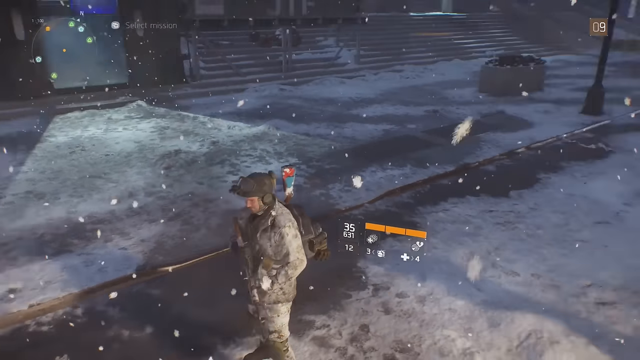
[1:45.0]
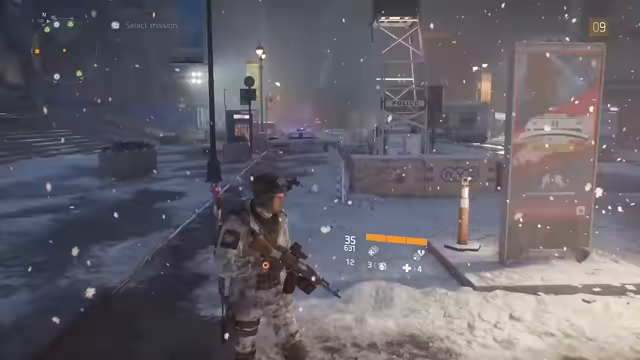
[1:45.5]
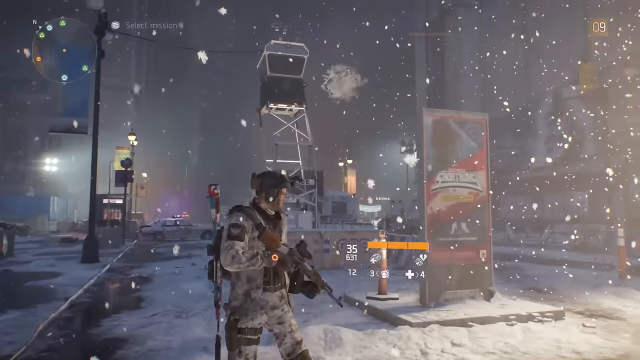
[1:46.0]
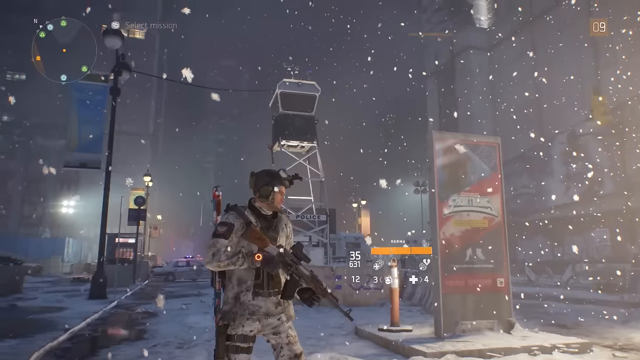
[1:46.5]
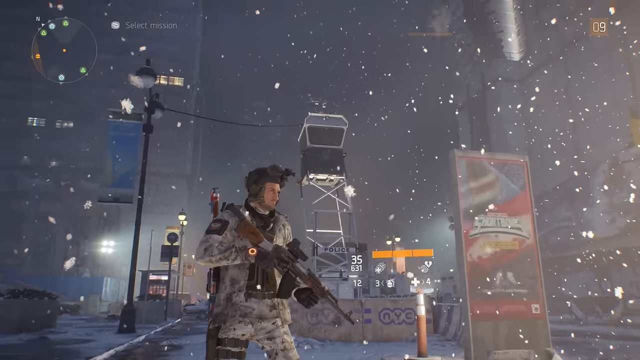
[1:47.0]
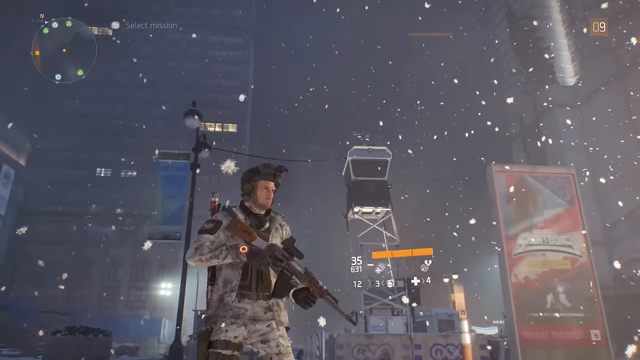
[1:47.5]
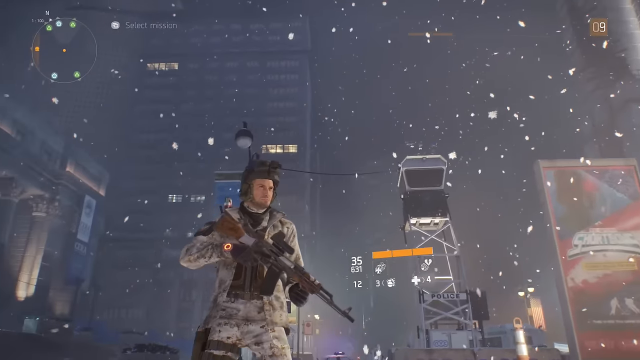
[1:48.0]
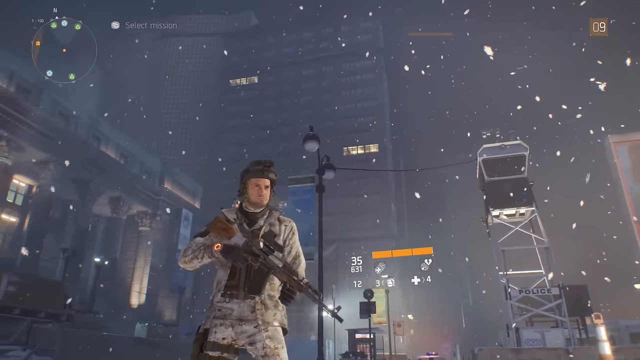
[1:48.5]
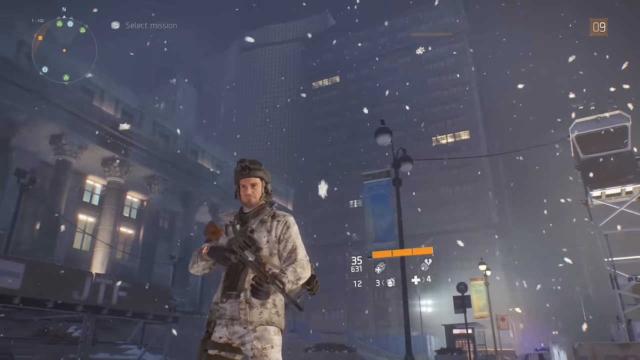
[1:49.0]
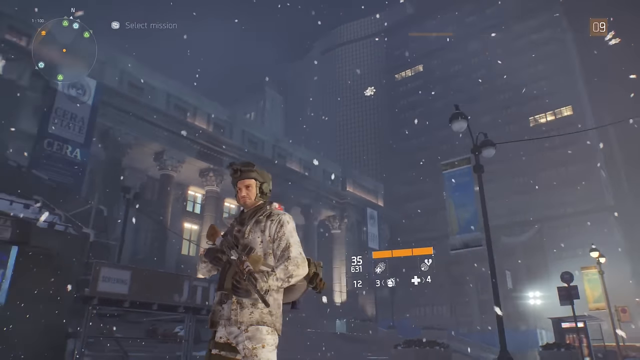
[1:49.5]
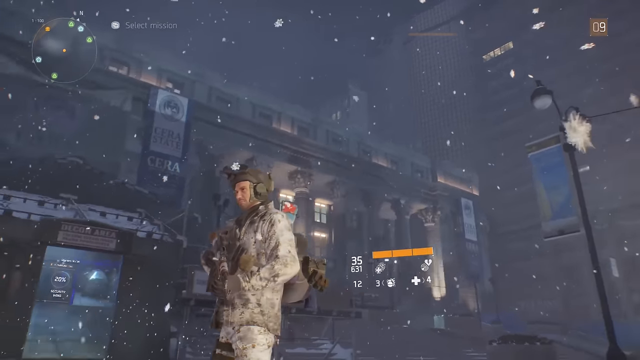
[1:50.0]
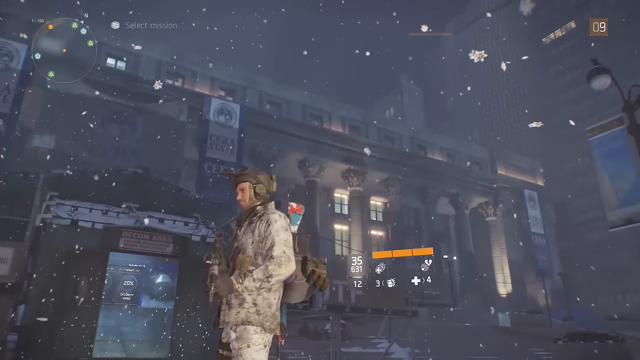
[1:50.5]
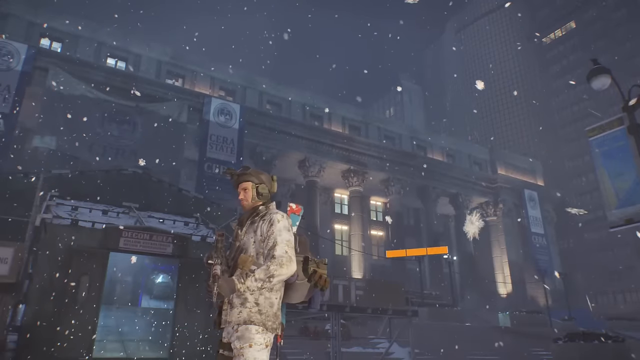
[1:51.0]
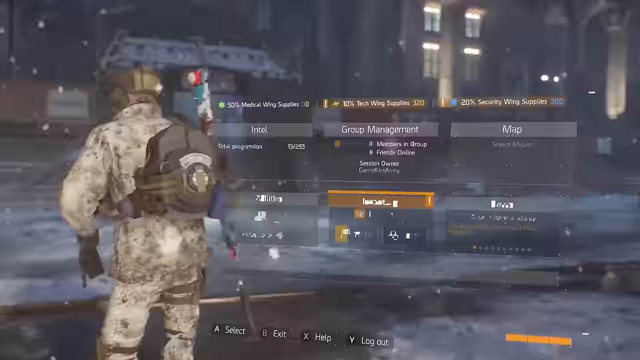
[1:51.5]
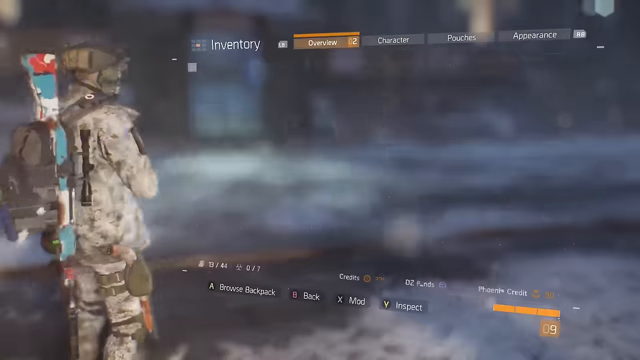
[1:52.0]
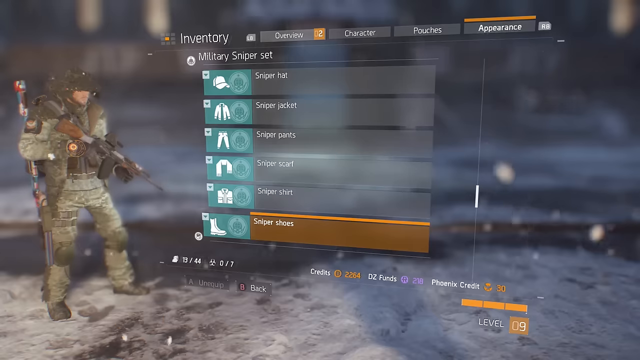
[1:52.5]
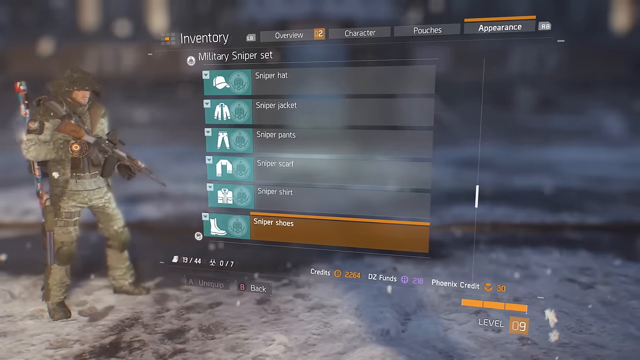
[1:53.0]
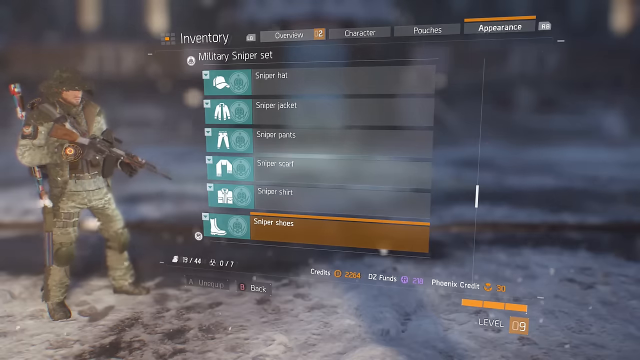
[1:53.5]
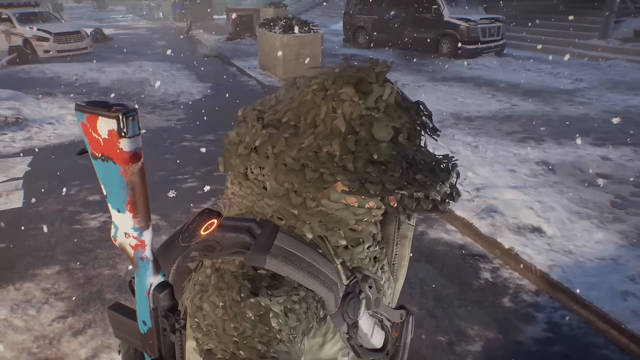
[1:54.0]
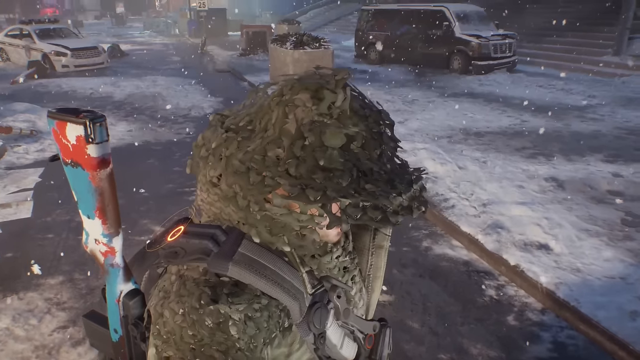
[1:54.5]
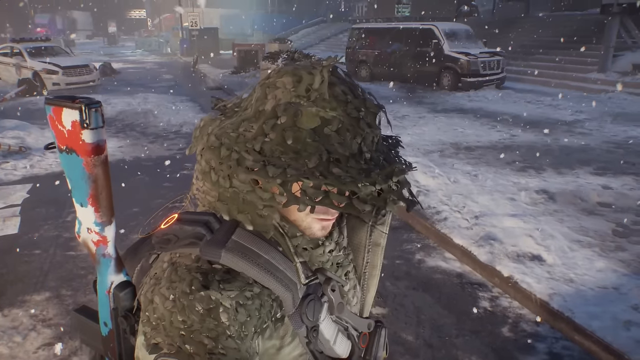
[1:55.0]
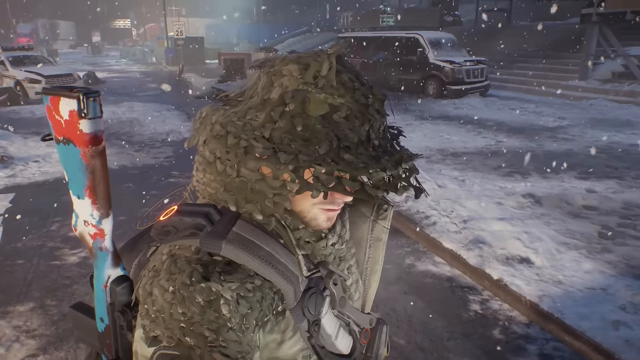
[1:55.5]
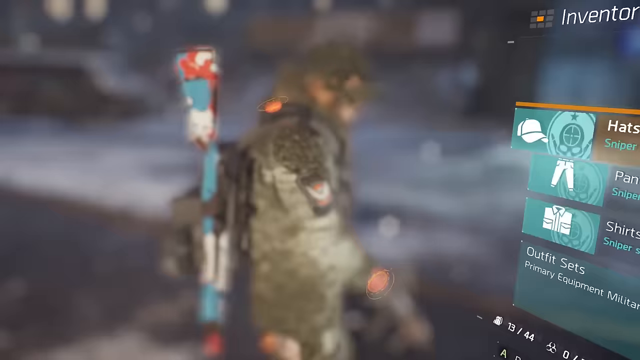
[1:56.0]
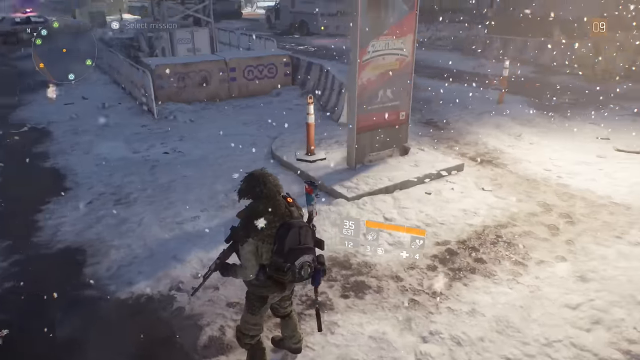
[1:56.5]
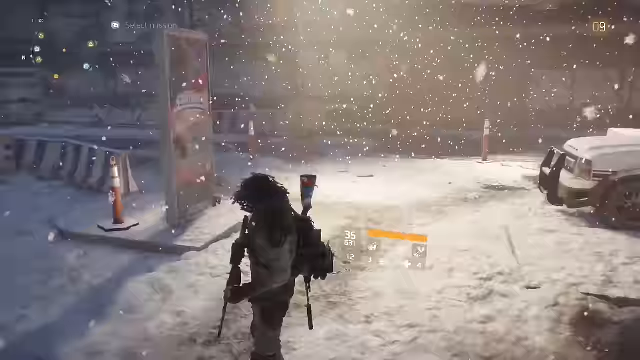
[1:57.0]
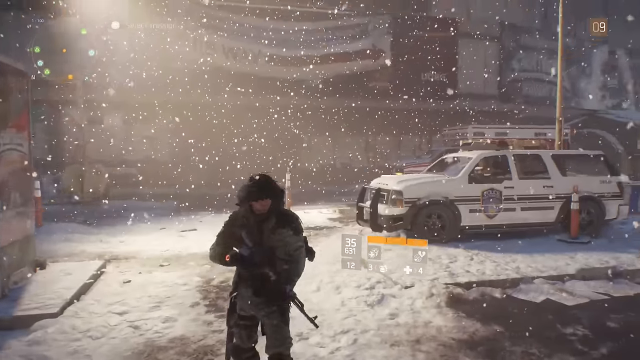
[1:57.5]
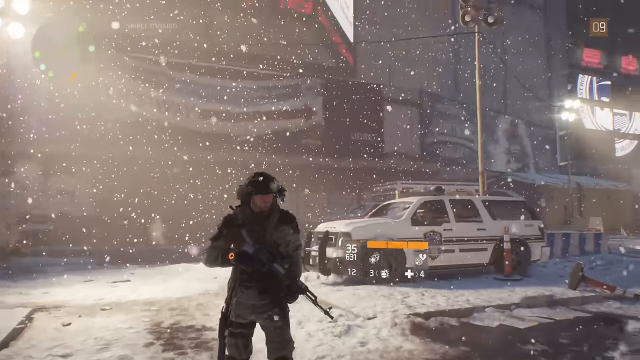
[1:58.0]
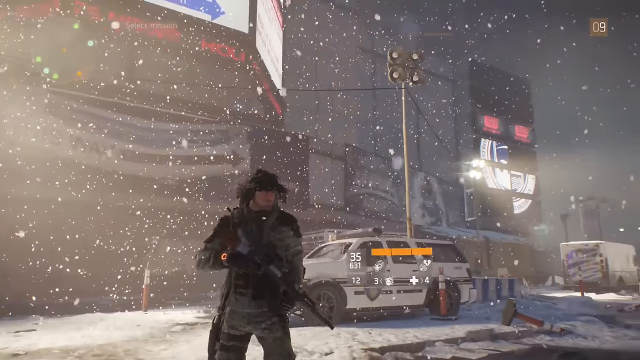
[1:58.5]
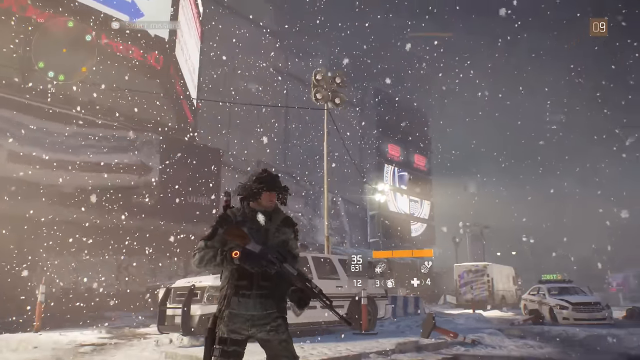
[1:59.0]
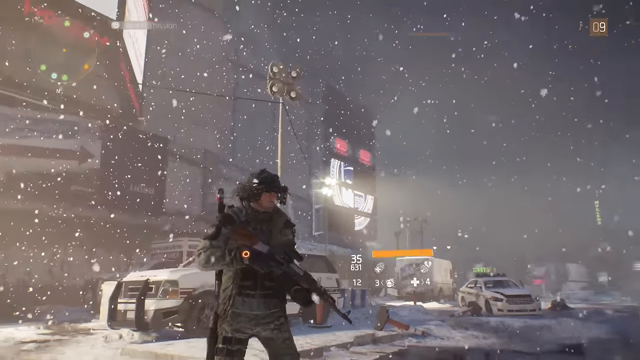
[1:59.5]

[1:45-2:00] The view pans in front of the character, showing his hat and face. He holds a gun in front of him, from his right shoulder and right hand, pointed down in front of his left hand. Behind him are some kind of tower, some lights and a tall building, and there is some kind of sign to the right of him. The view pans around the character to his backpack as a menu comes up that says "Military Sniper Set," "Sniper Hat," "Sniper Jacket," "Sniper Pants," "Sniper Scarf," "Sniper Shirt" and "Sniper Shoes," with "Sniper Shoes" highlighted. The view then shows the character from above; the hat has changed and looks like a hat with fake foliage on top, kind of hanging down the edges. The view pans around to show the character from the side in front, with the military SUV behind him.